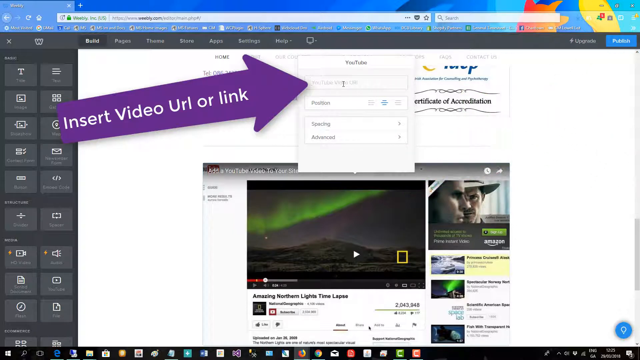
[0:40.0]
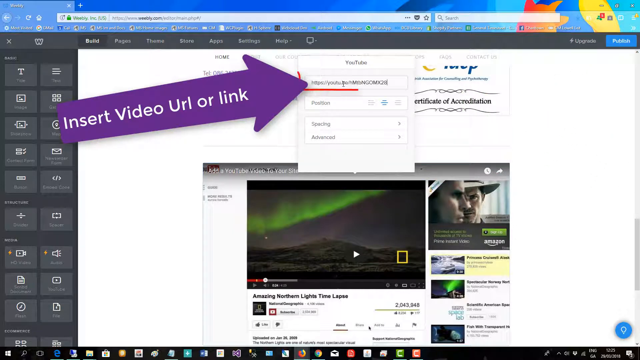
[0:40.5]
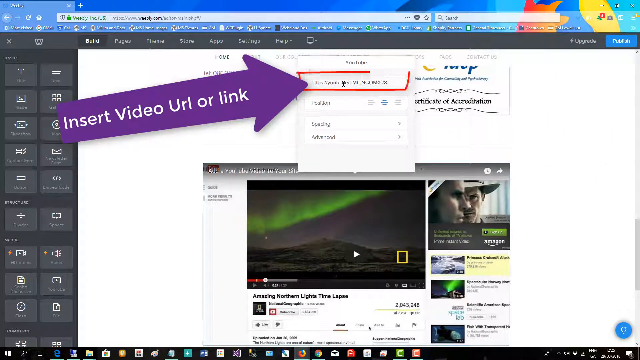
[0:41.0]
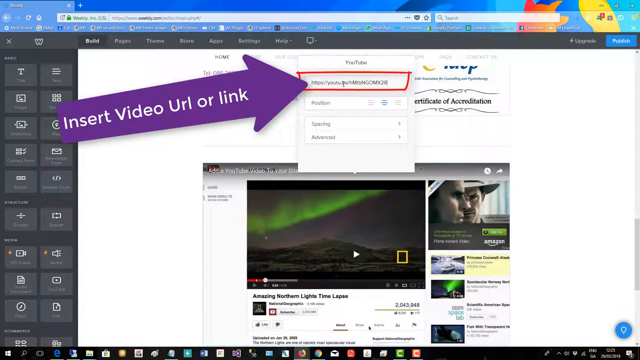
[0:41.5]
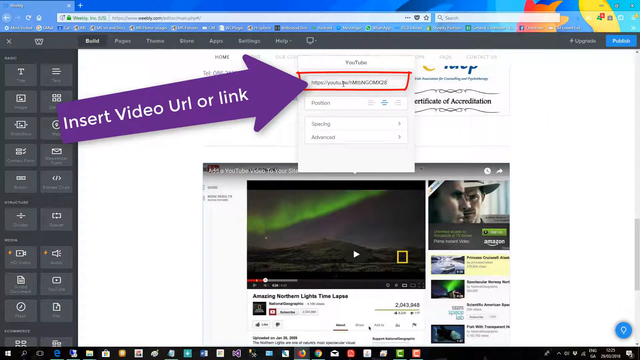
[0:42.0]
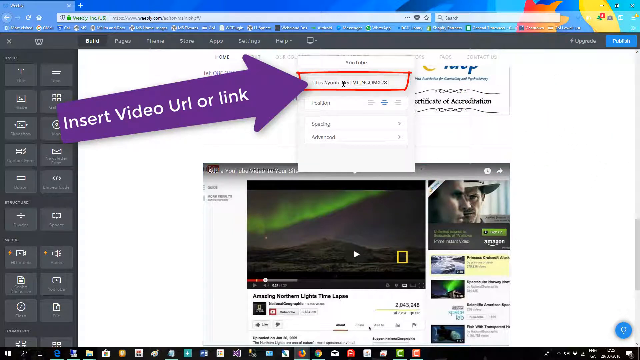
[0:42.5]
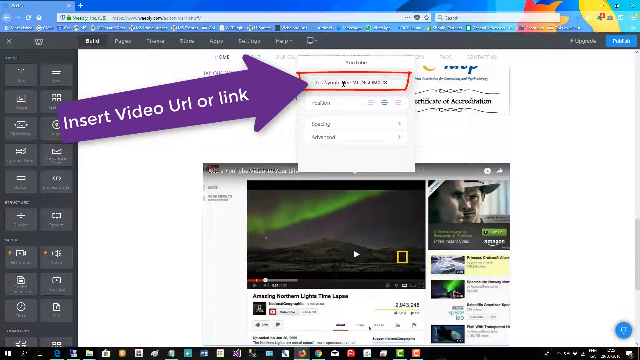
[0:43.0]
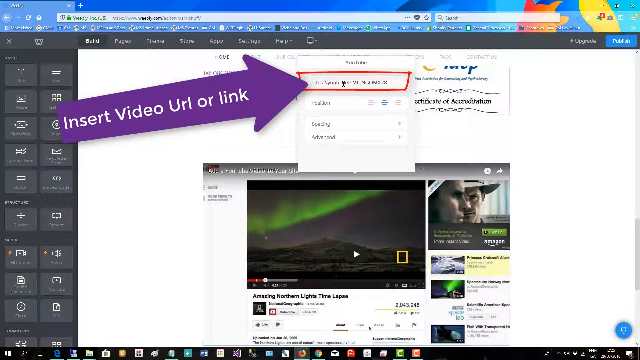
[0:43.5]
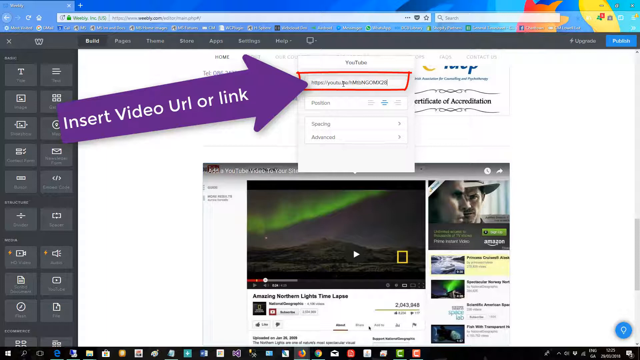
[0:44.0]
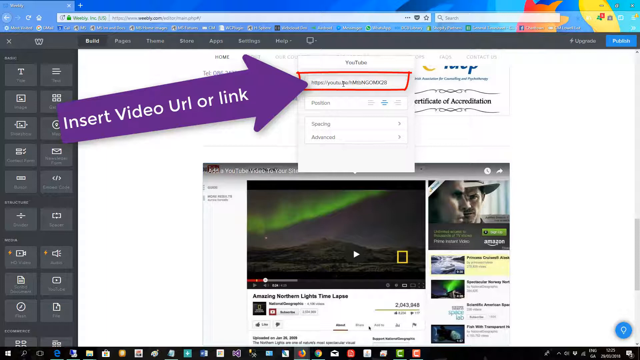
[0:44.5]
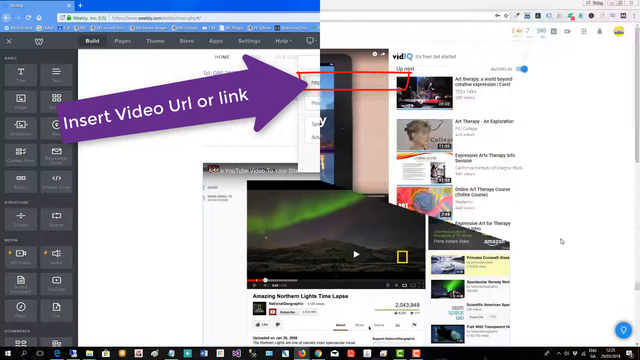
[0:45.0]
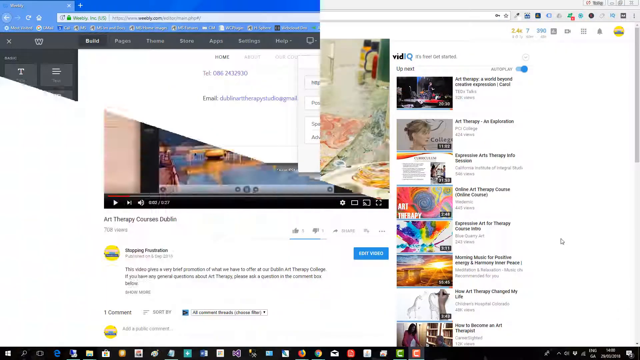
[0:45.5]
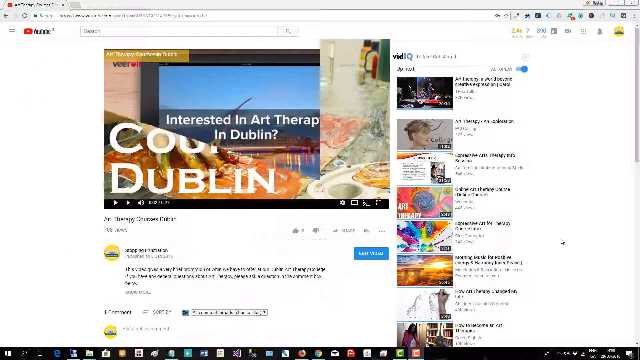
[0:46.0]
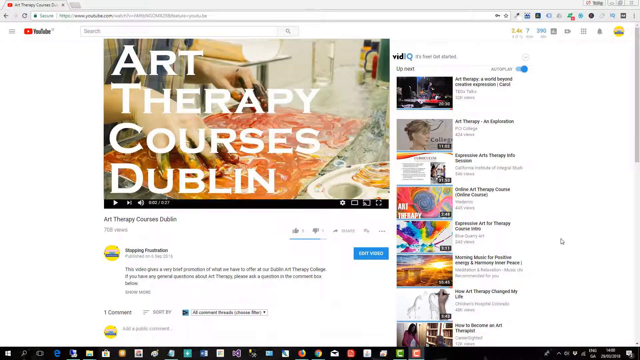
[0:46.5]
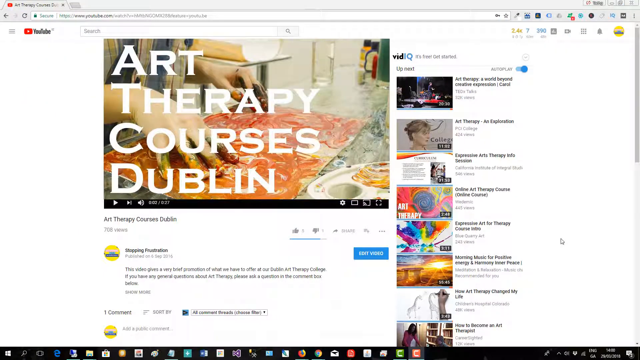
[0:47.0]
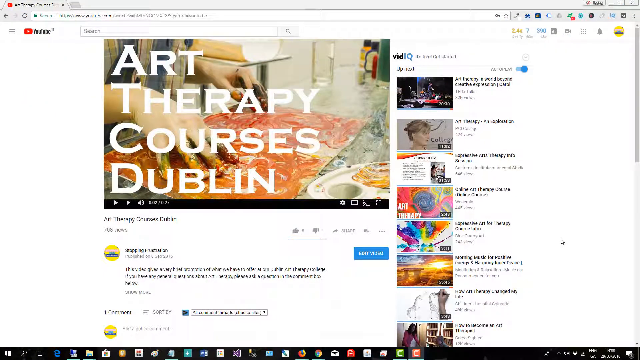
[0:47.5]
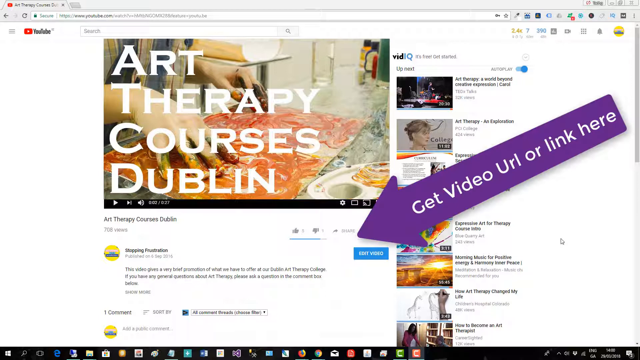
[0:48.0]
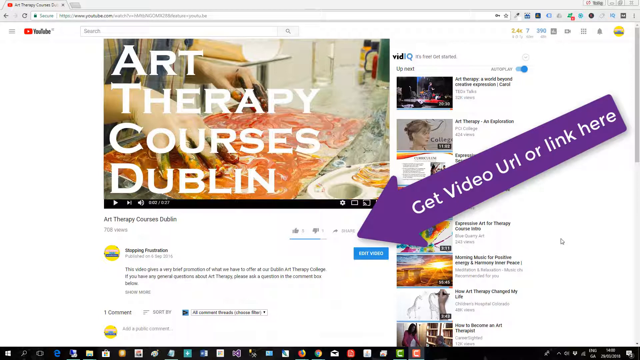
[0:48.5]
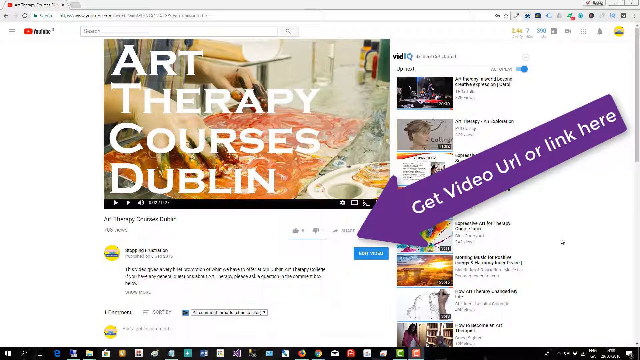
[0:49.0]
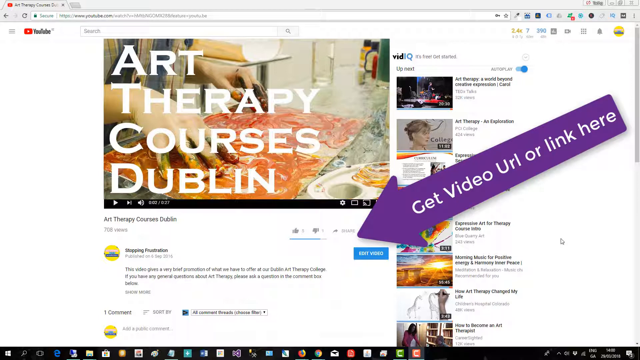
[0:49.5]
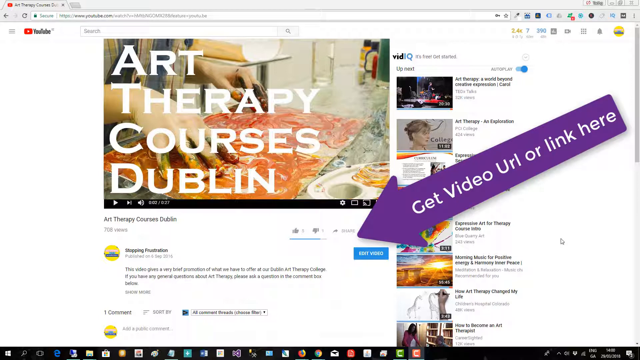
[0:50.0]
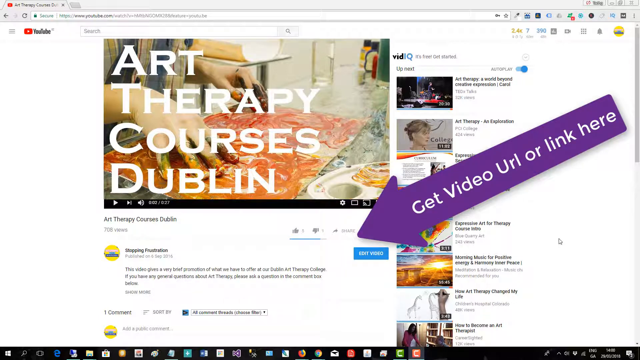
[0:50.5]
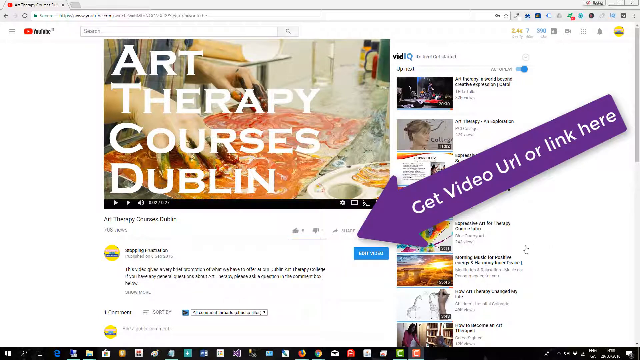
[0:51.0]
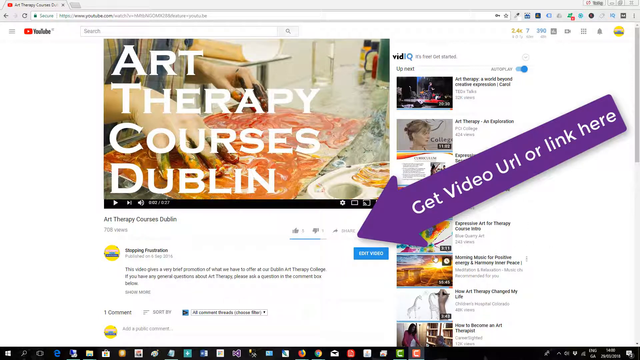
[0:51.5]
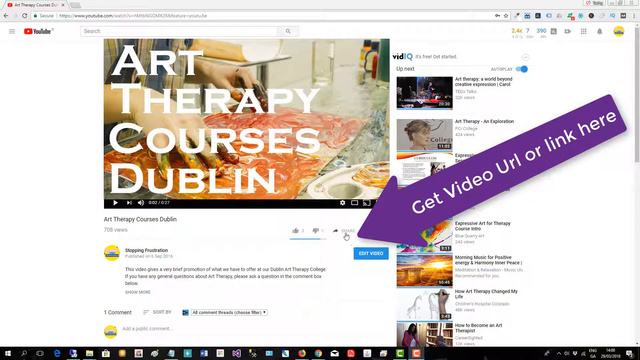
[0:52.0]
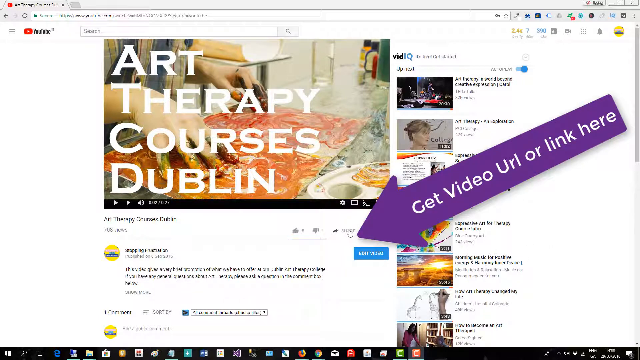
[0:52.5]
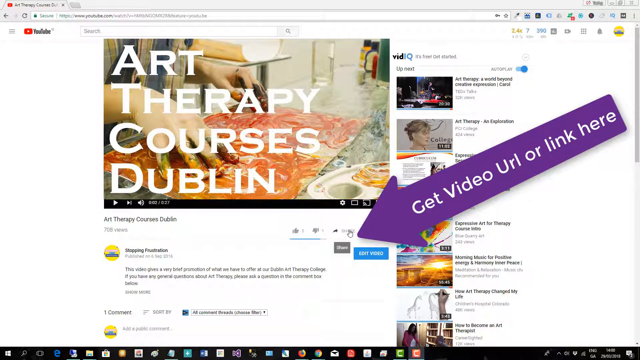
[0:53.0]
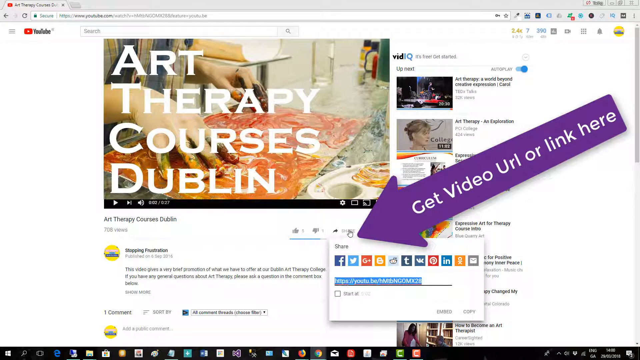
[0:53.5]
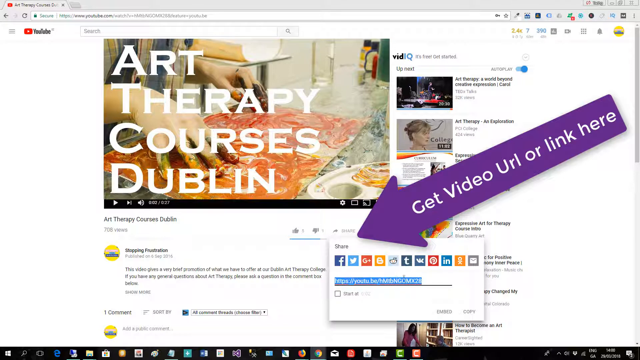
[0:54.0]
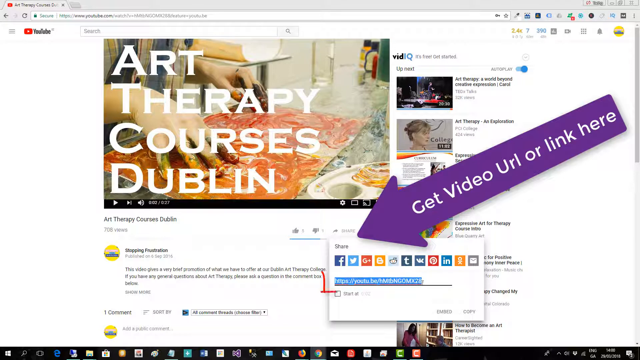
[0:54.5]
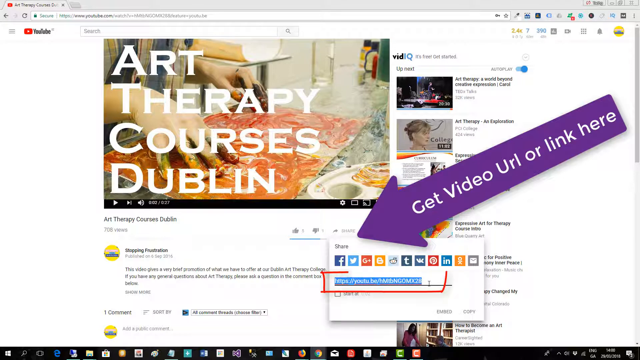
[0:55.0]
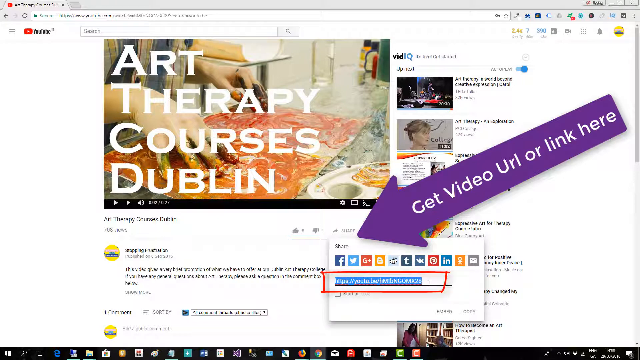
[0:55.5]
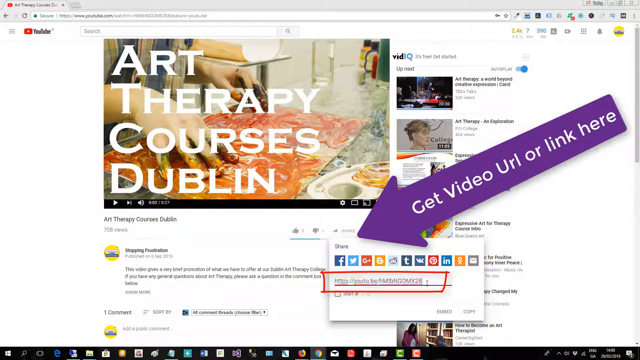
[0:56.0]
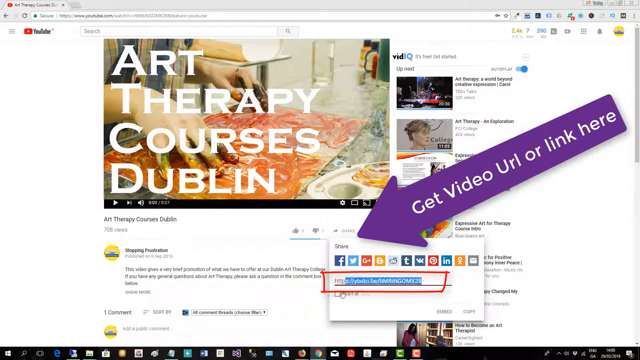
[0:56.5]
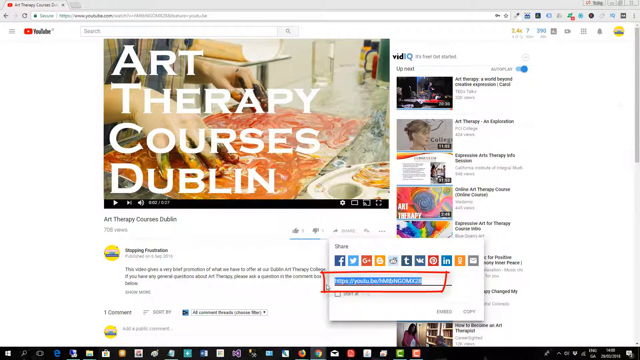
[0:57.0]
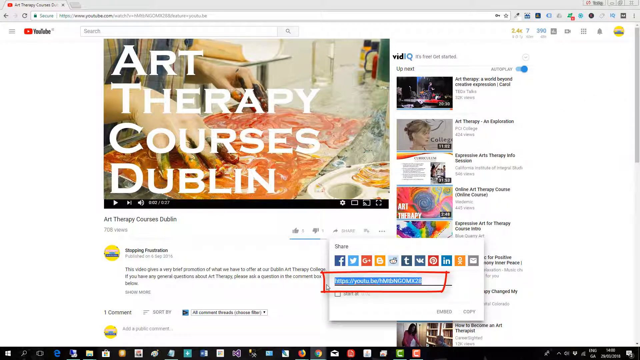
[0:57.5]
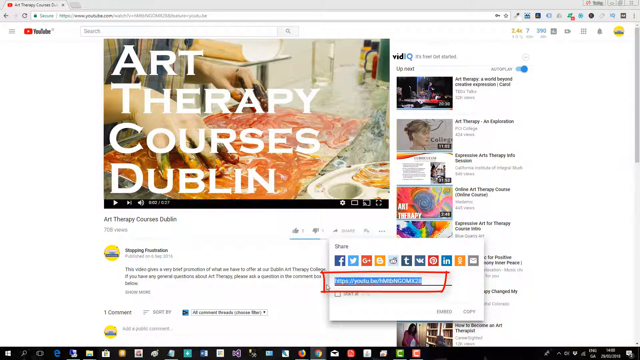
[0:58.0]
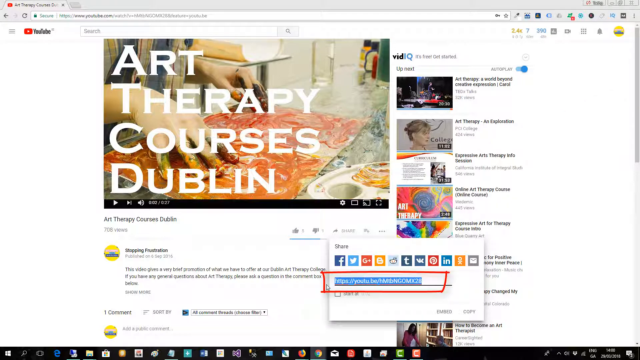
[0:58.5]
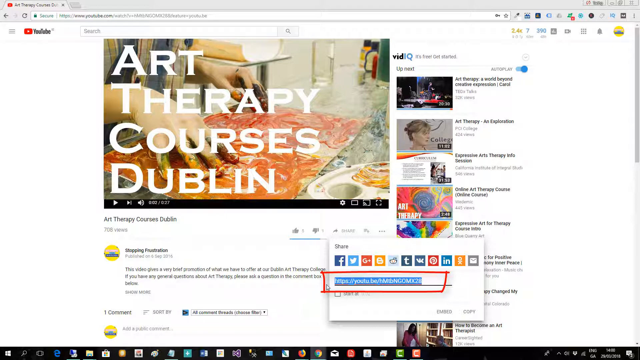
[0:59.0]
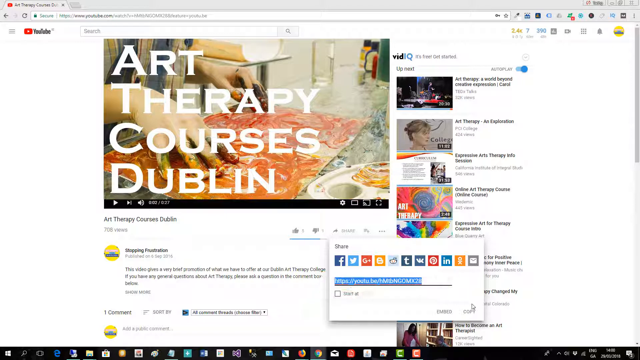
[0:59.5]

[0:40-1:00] A purple arrow with white text points to a small field that needs to be filled in with information about YouTube. The cursor pastes a link into that YouTube field. The video changes to a YouTube page with a video displayed and other videos on the other side. The cursor goes down to share and clicks it, opening a small box with symbols for Facebook, Twitter, Google, Files and other websites. A purple arrow points at the share symbol, with white text reading "get video URL or link here." The video shows how to share a video link by copying it and sharing it on social media.